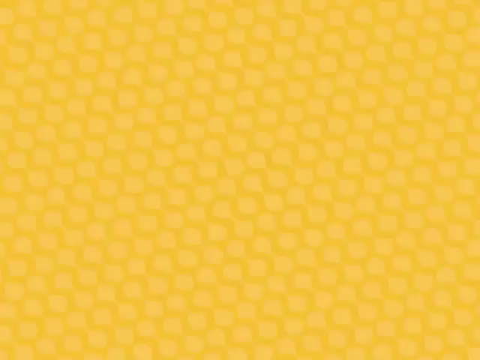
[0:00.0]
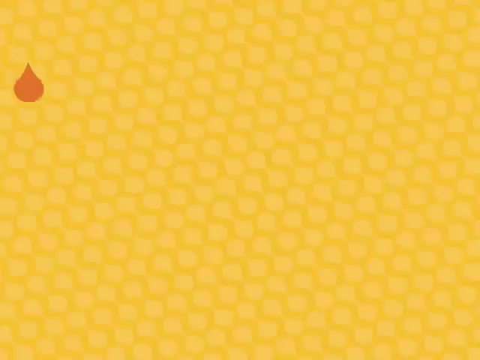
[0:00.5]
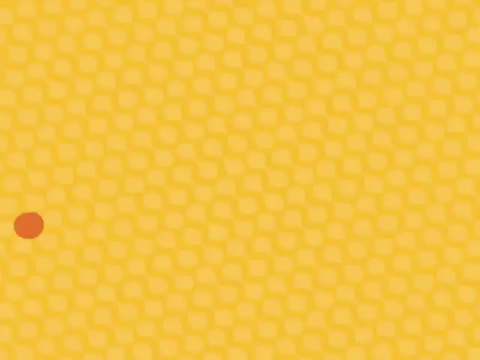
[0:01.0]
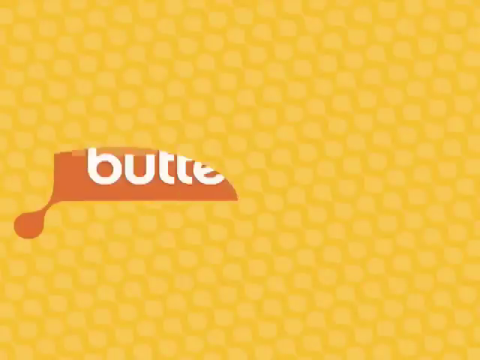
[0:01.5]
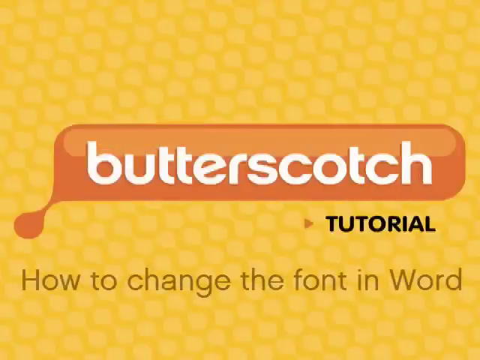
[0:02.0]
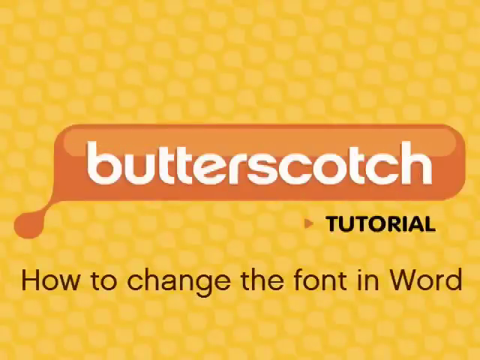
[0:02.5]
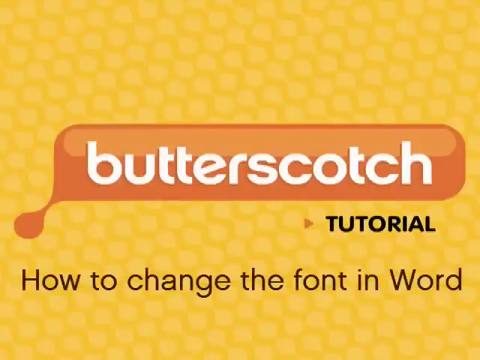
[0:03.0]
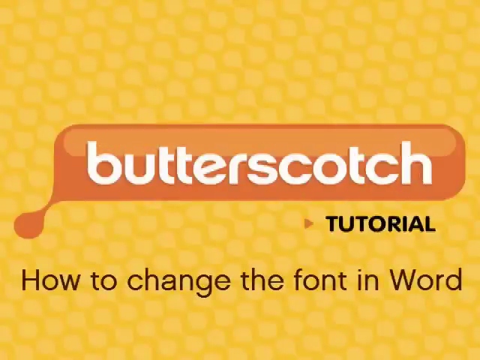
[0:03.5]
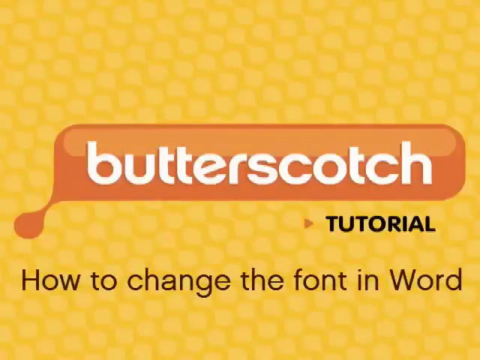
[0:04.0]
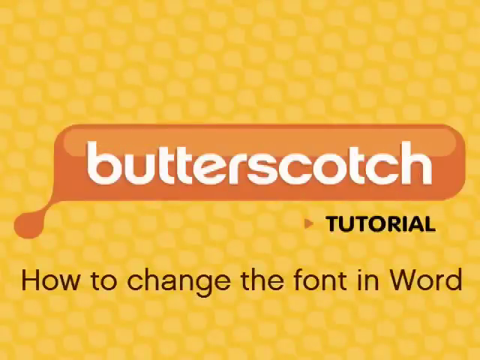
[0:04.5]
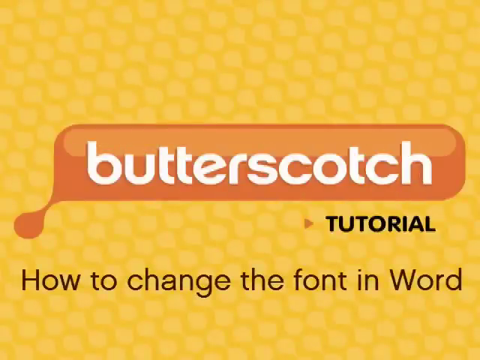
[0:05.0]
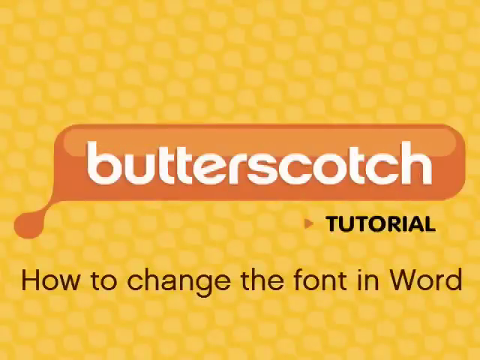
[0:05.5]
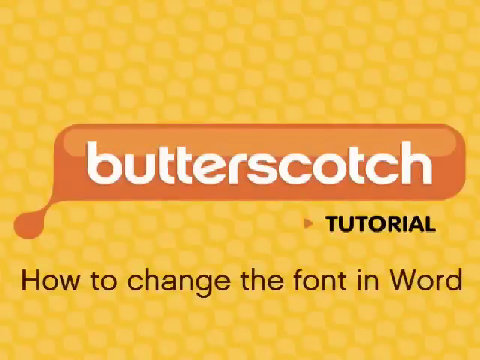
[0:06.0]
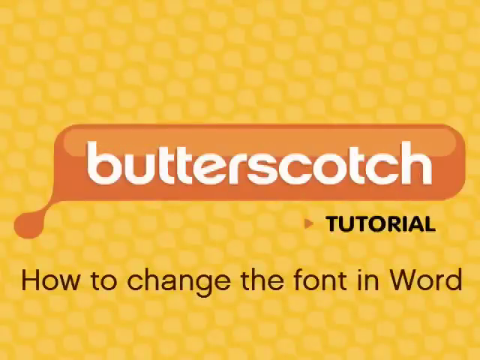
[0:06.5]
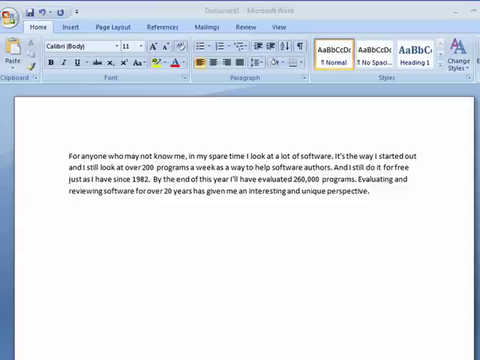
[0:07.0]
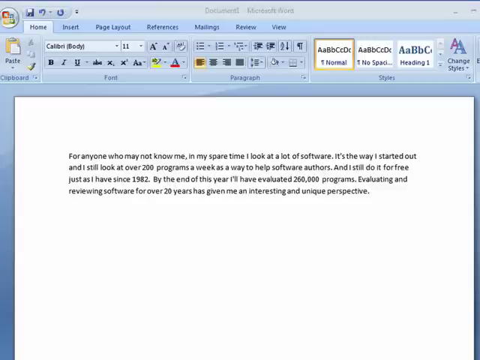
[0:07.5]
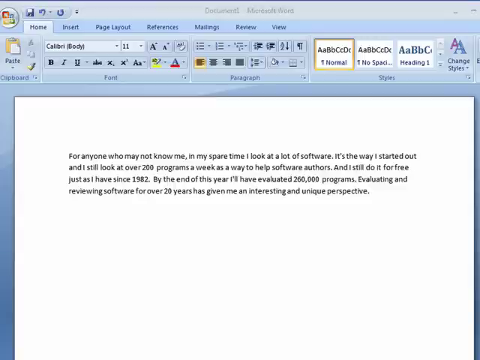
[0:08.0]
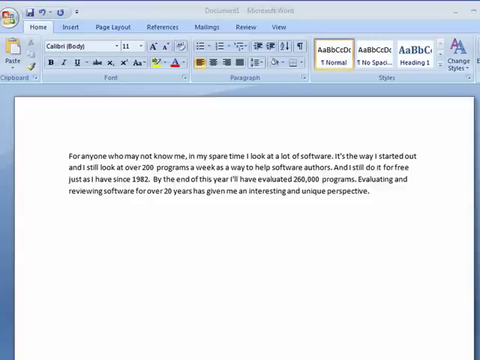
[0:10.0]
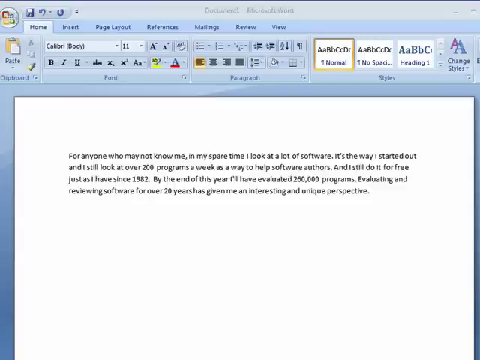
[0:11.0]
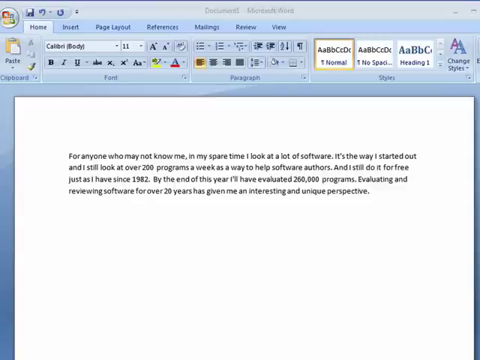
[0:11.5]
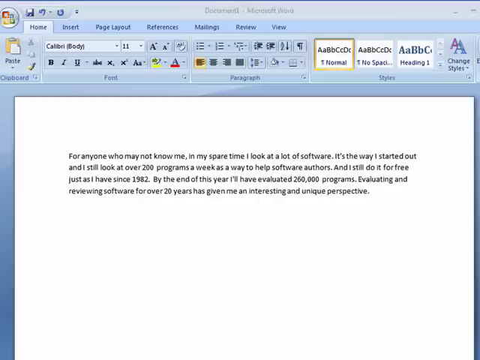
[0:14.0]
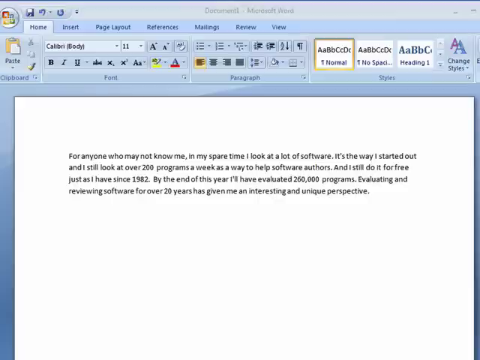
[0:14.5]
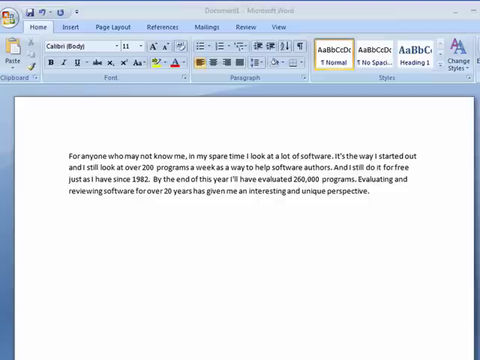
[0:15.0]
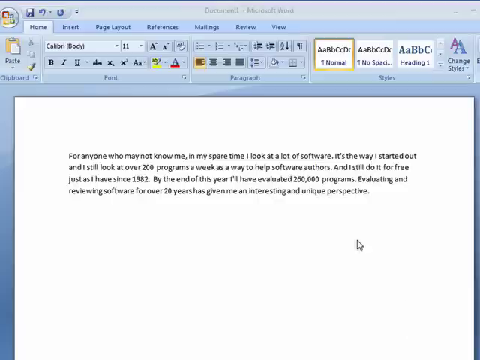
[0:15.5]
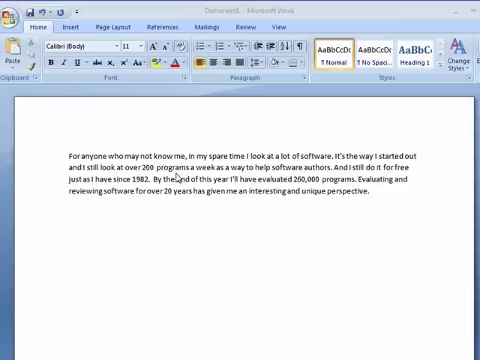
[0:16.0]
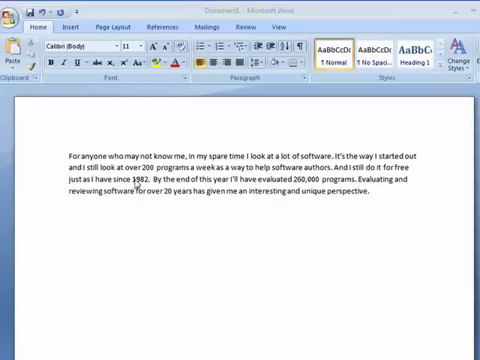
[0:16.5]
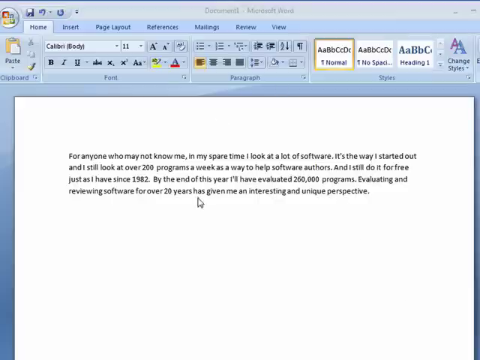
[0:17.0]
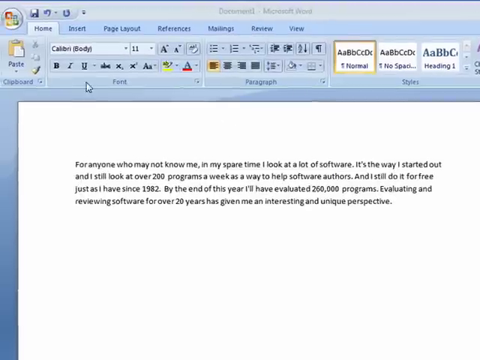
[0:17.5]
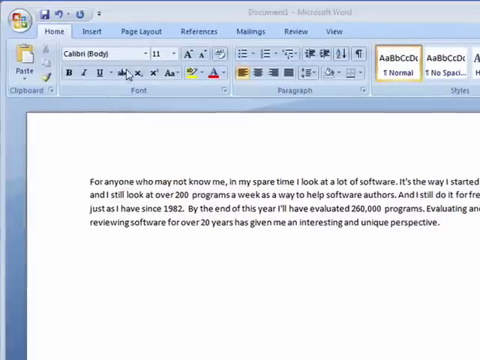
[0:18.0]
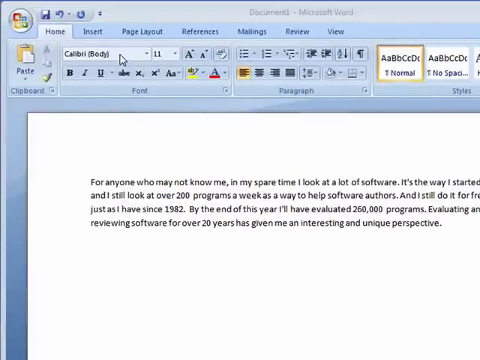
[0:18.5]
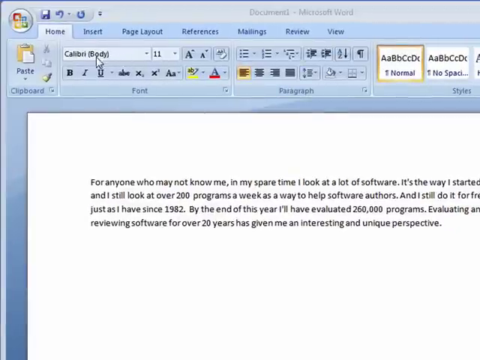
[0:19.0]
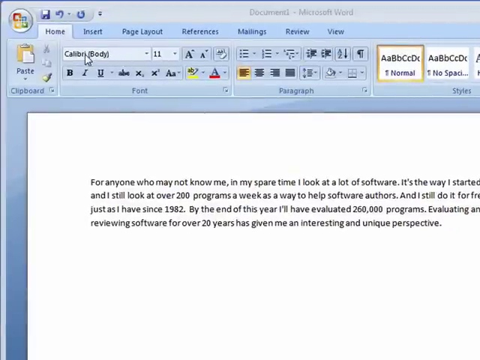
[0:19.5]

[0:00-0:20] The video appears to open as an introduction to a Butterscotch tutorial, with colors that kind of match the Butterscotch name. There are several unique figures in the background, unclear whether related to butterscotch or just a design, and something appears to drip onto the page. The word "tutorial" is shown. A basic text has been typed up, apparently to demonstrate the fonts in Word.